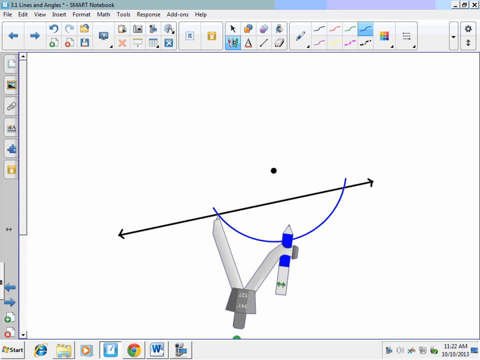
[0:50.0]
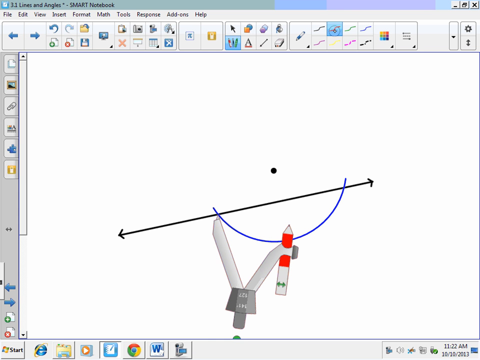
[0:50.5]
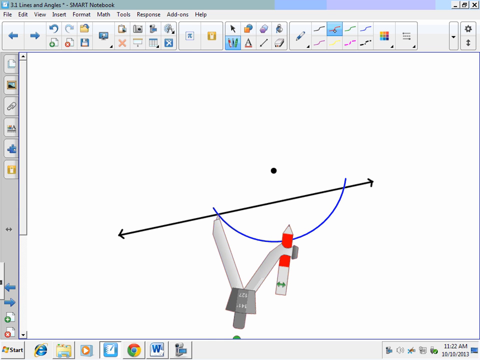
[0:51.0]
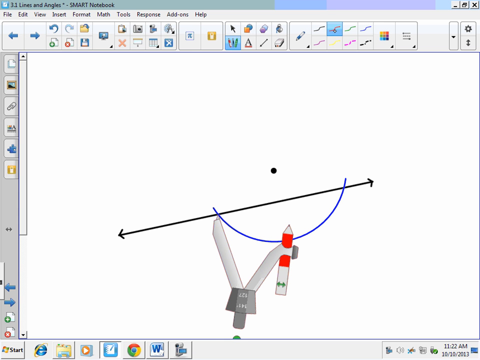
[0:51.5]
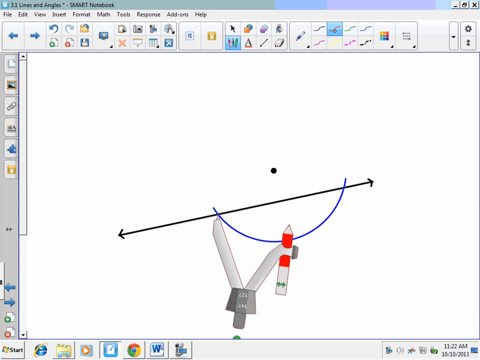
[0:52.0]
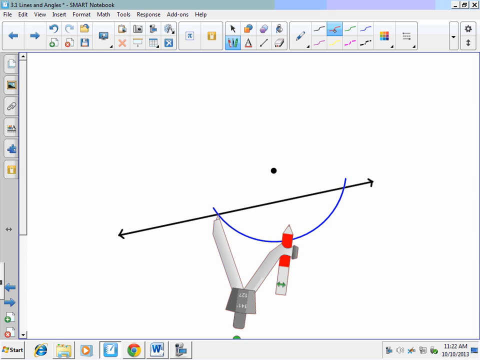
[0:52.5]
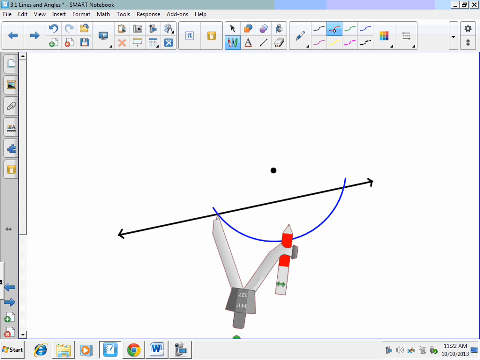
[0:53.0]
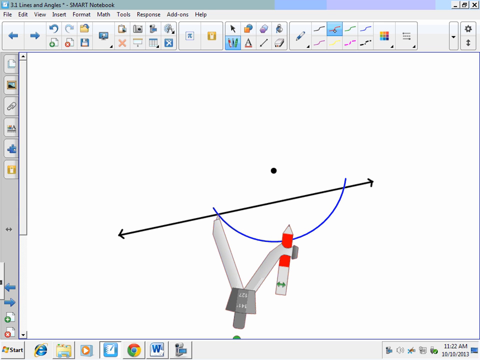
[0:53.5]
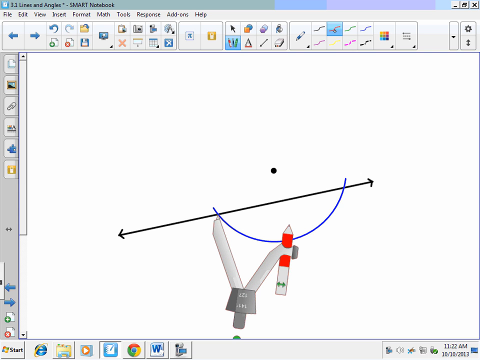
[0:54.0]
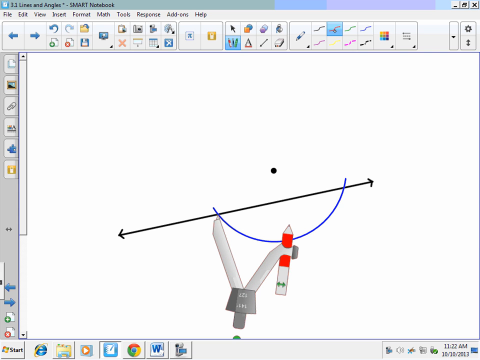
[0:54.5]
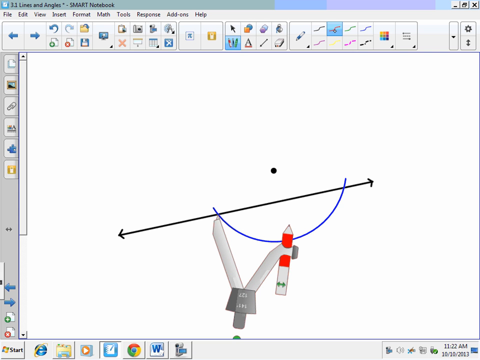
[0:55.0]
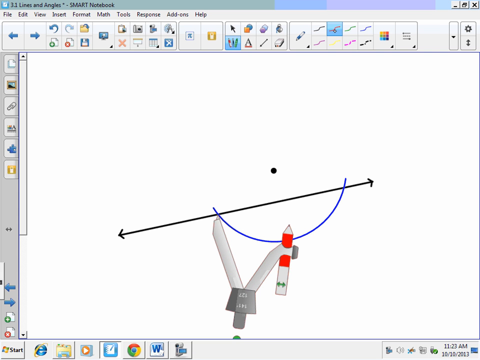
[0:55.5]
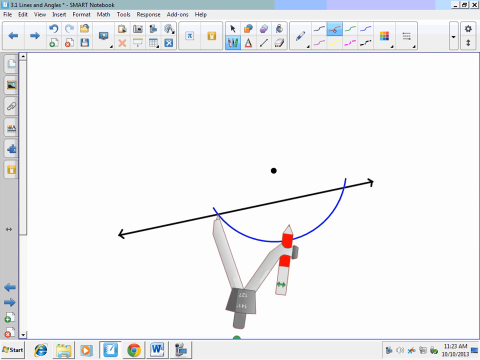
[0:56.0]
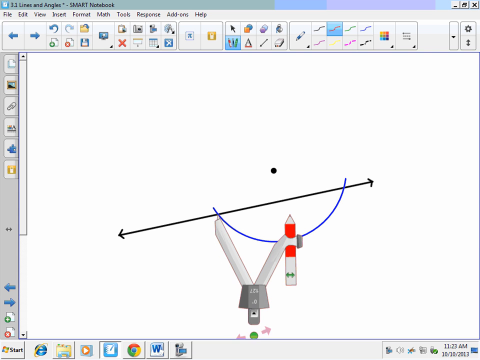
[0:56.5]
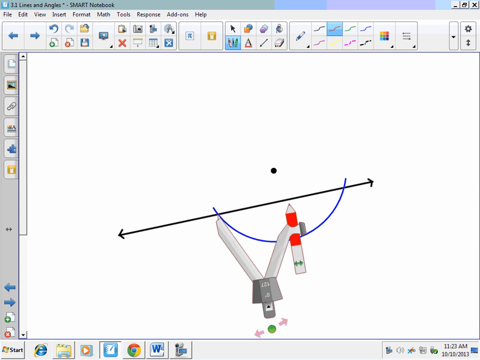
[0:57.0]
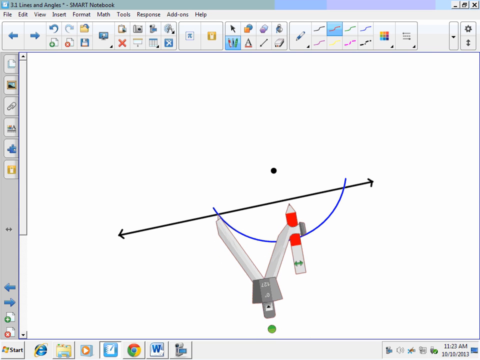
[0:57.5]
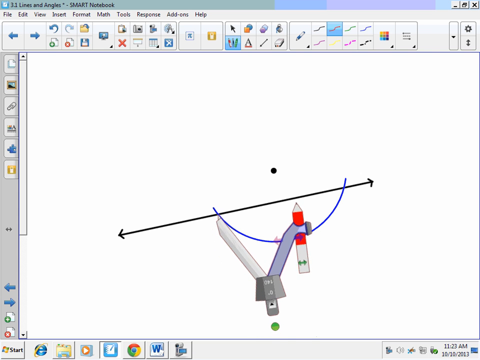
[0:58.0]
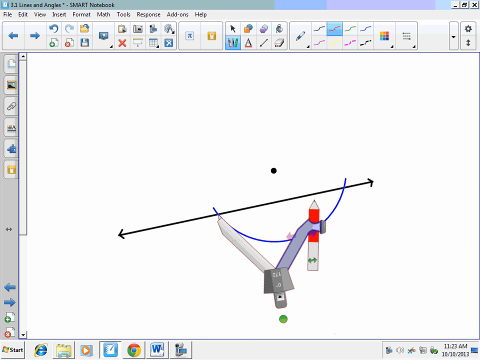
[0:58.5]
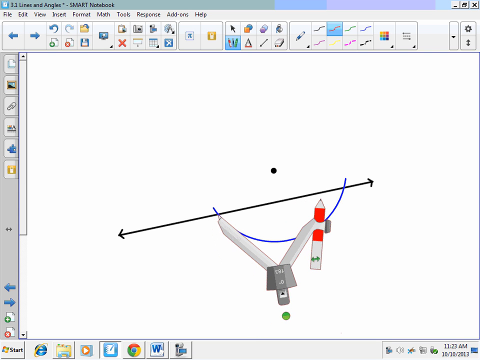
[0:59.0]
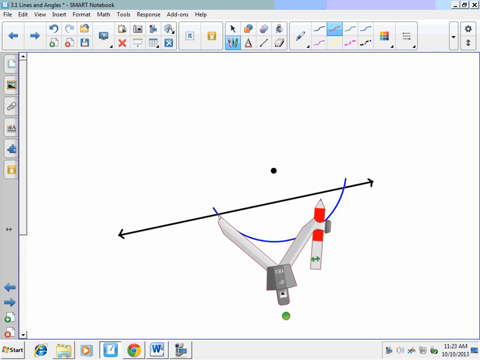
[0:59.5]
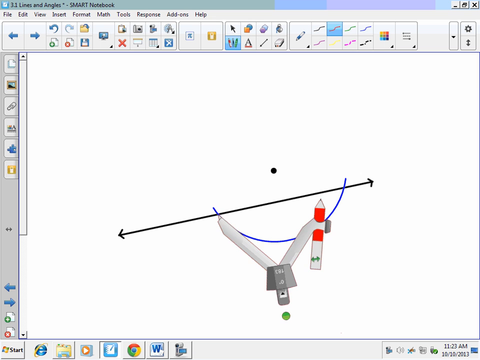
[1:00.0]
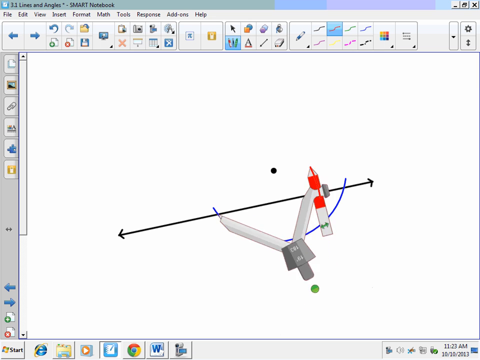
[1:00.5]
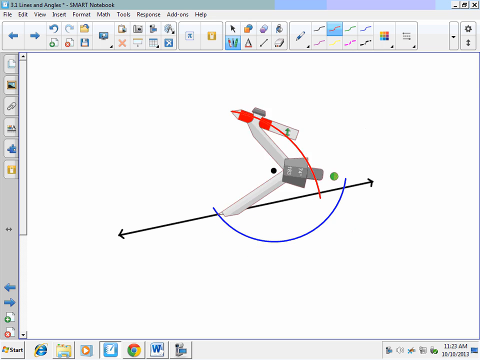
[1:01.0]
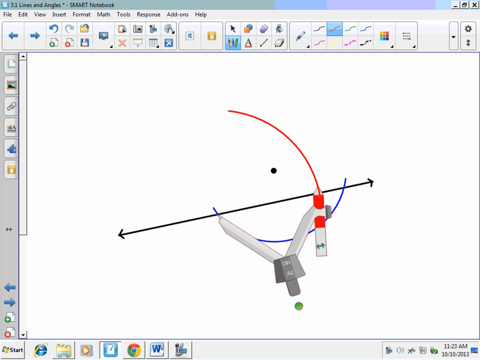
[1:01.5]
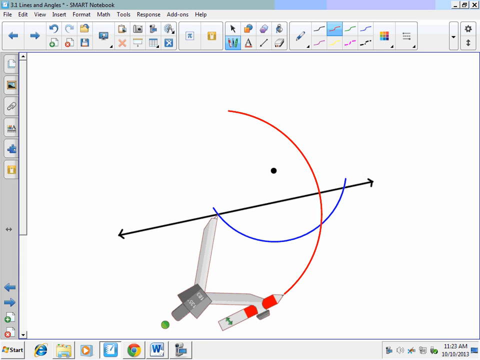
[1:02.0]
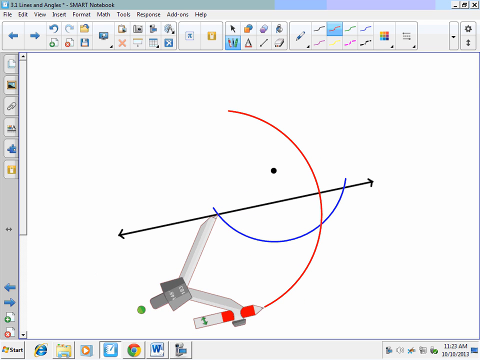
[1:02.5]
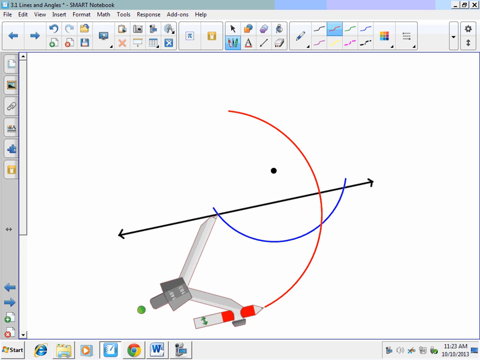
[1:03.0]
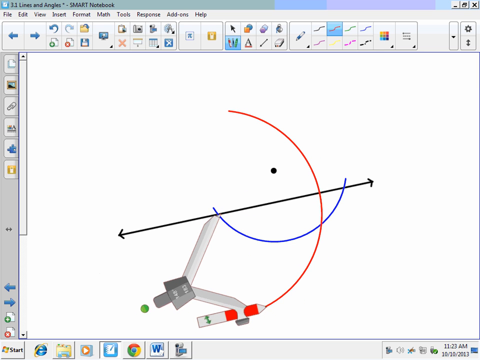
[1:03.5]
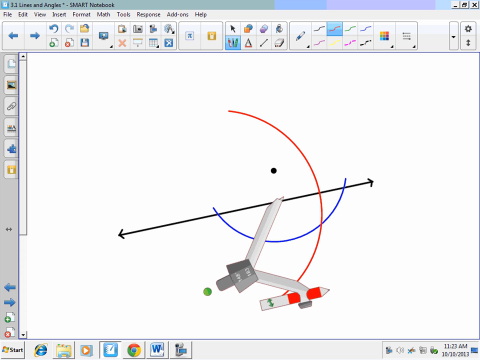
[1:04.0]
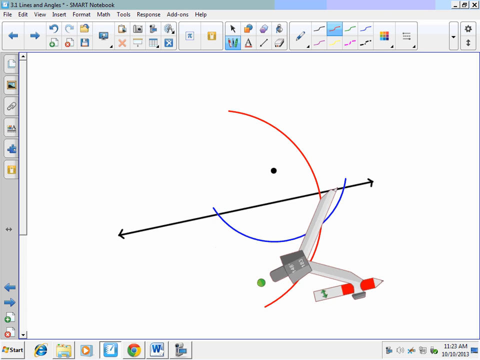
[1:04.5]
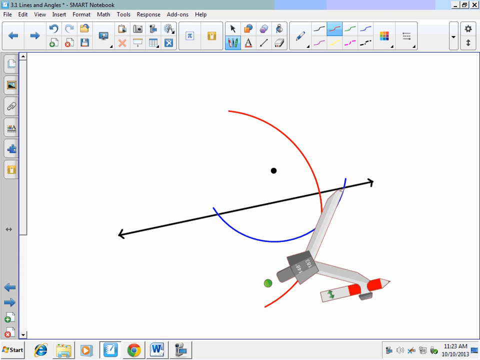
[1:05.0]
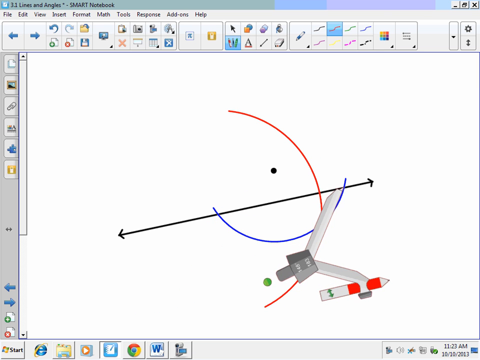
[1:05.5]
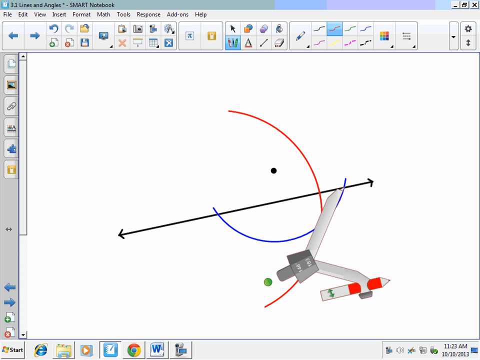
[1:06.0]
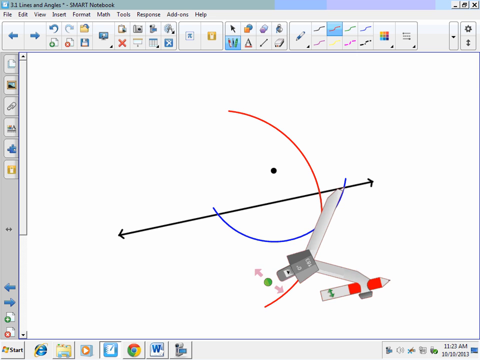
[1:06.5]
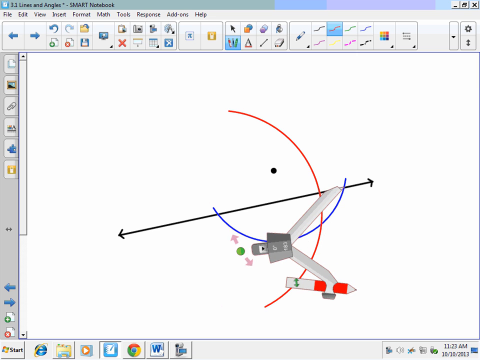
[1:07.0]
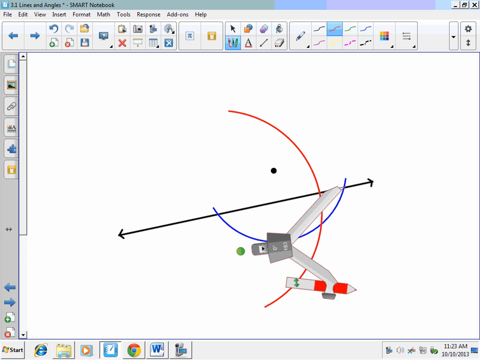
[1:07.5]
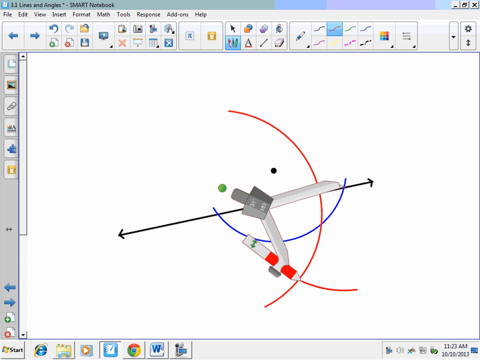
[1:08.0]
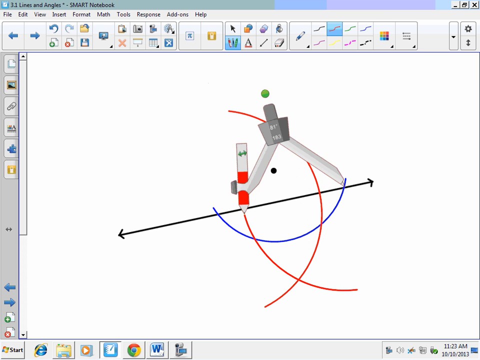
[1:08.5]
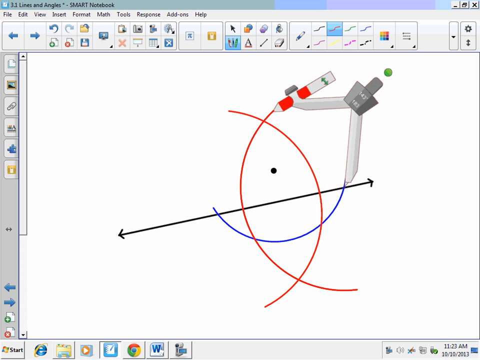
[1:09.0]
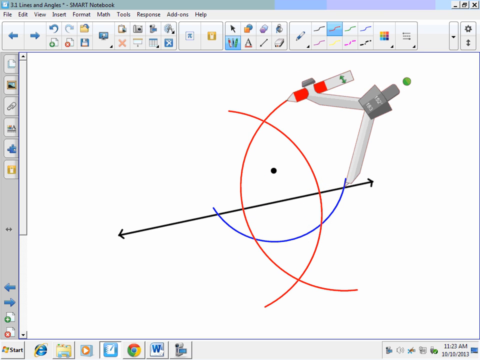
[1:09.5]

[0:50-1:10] The page shows the line that was drawn with the pencil's clockwise and anticlockwise strokes. The pencil color switches to red and blue, and the protractor moves, this time kind of extending, and another red line is drawn. That red line intersects both the blue half circle and the black line, goes in the opposite direction from the blue line, and is a lot bigger than the blue line. The red semicircles are bigger than the blue one and parallel to each other, while the blue one is horizontal on the line; the two red circles are vertical on the line. The background stays constant, with no changes other than the addition of new circles.